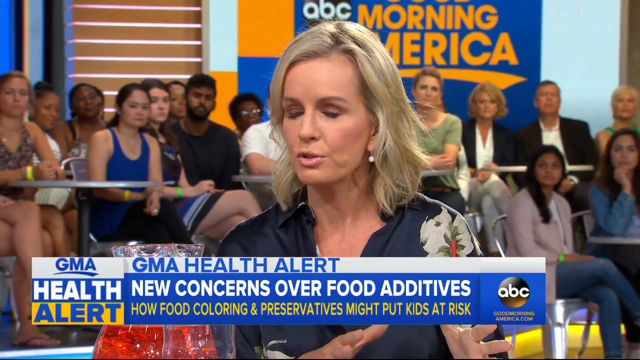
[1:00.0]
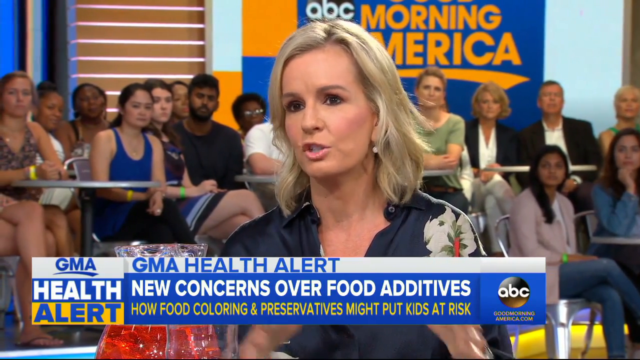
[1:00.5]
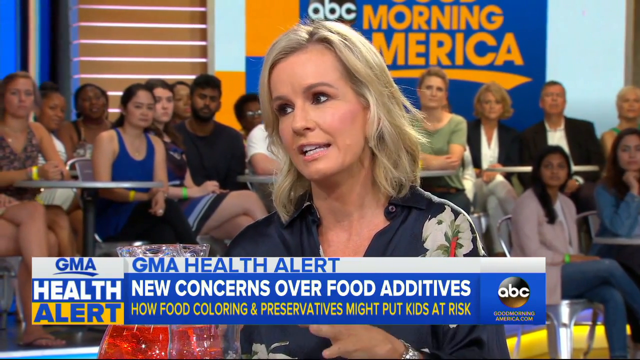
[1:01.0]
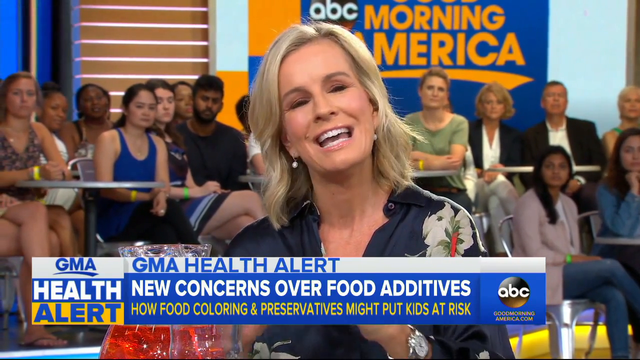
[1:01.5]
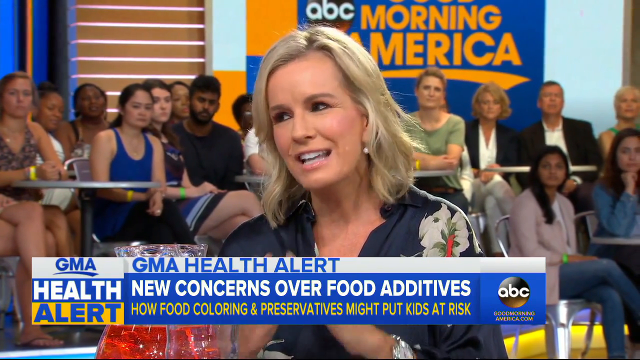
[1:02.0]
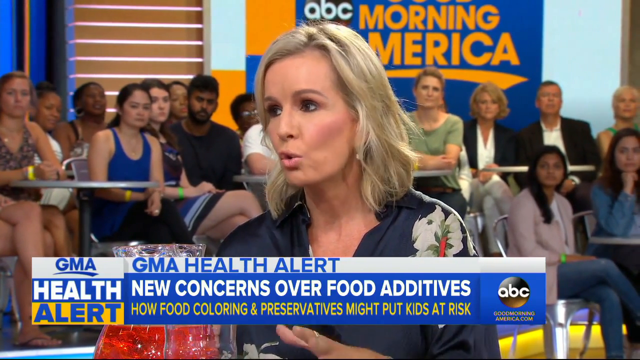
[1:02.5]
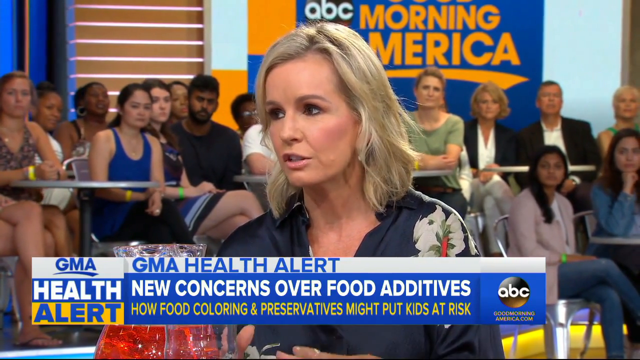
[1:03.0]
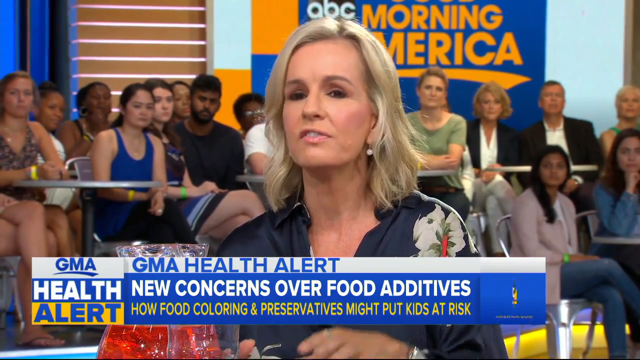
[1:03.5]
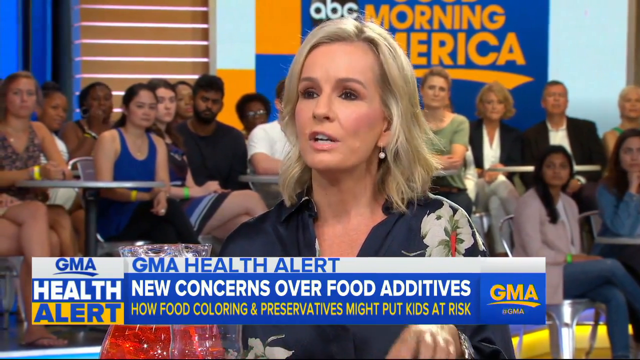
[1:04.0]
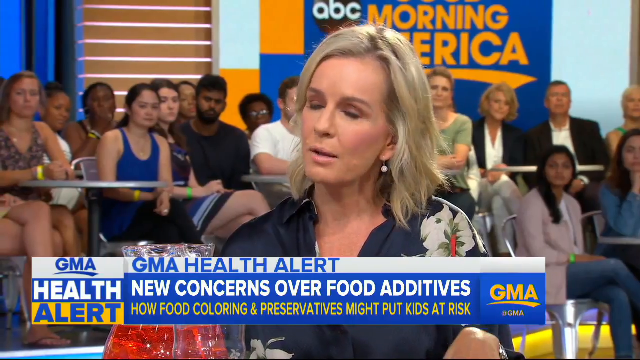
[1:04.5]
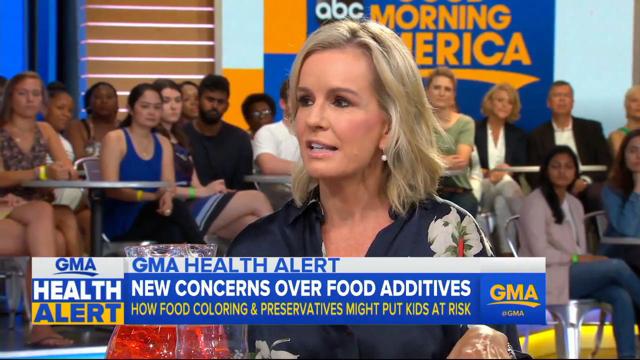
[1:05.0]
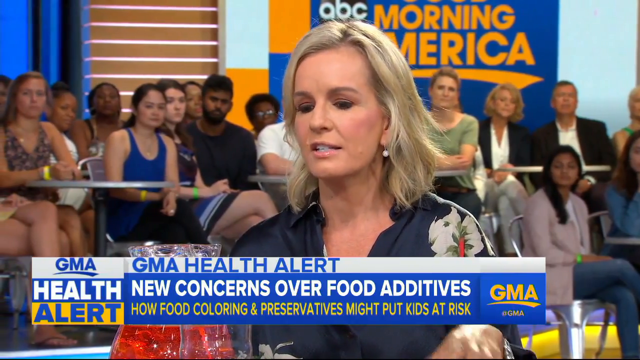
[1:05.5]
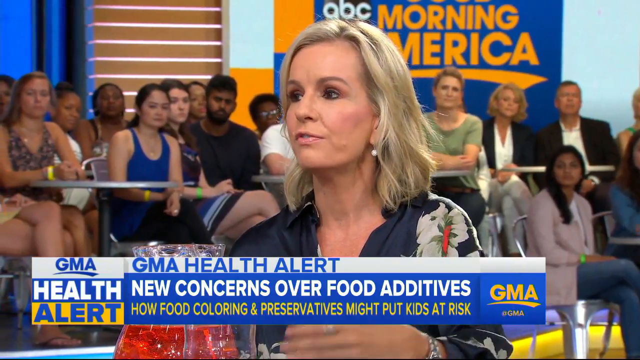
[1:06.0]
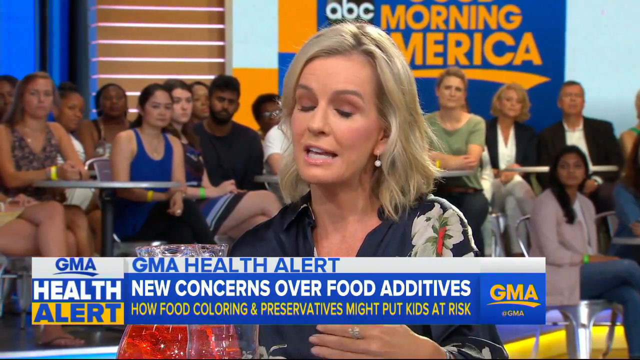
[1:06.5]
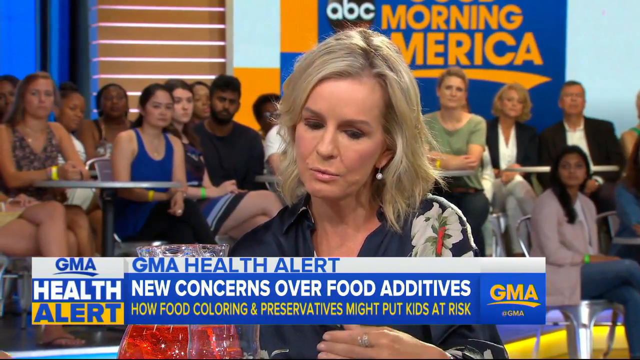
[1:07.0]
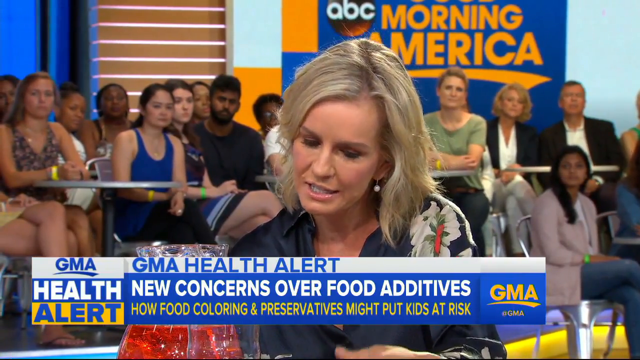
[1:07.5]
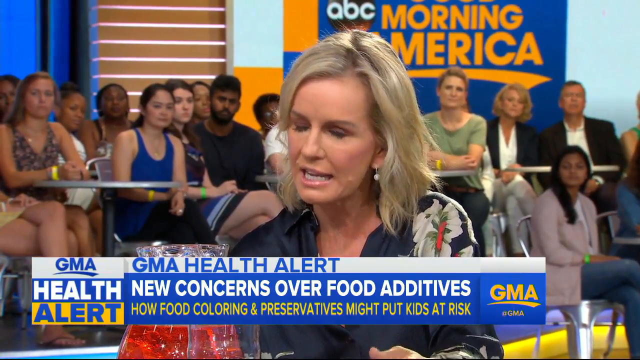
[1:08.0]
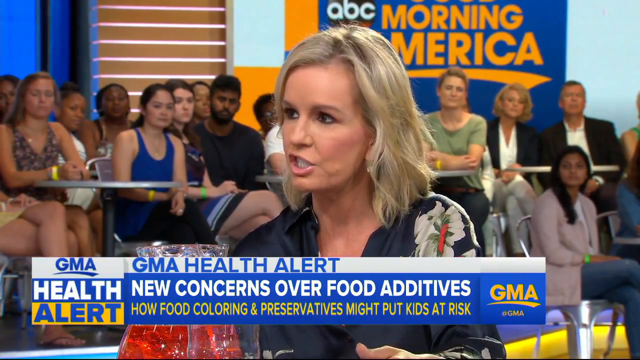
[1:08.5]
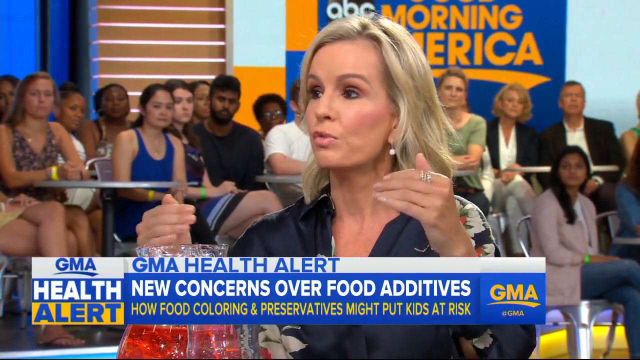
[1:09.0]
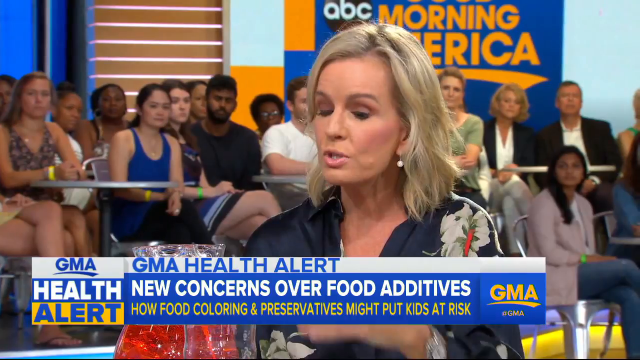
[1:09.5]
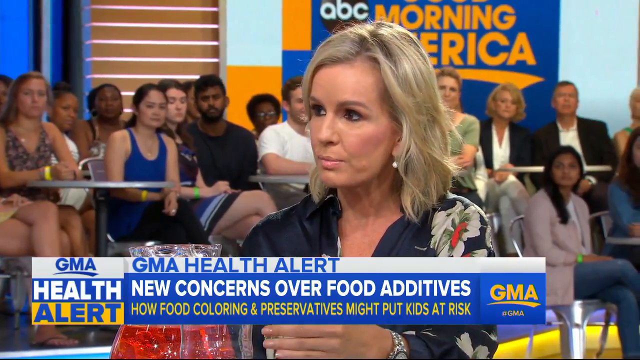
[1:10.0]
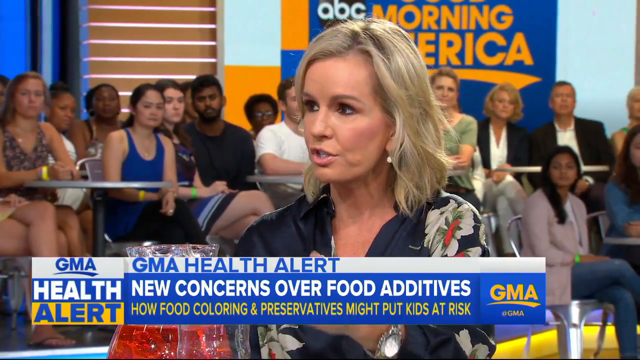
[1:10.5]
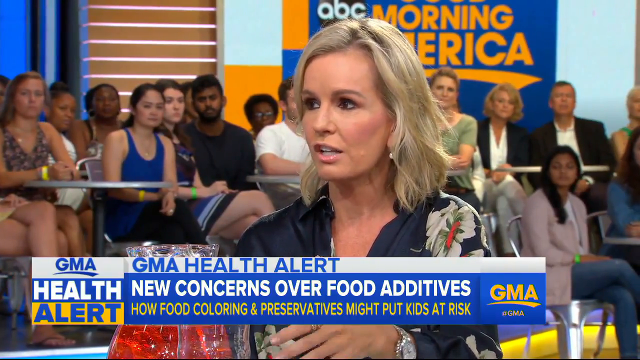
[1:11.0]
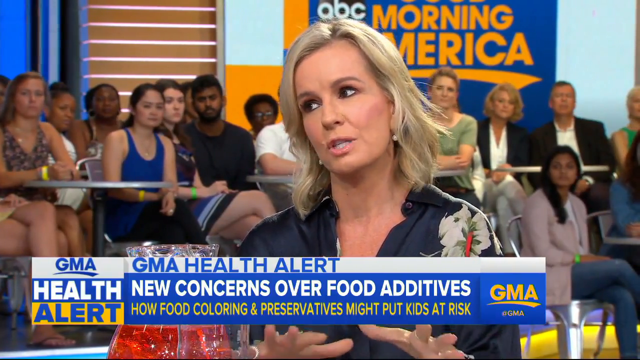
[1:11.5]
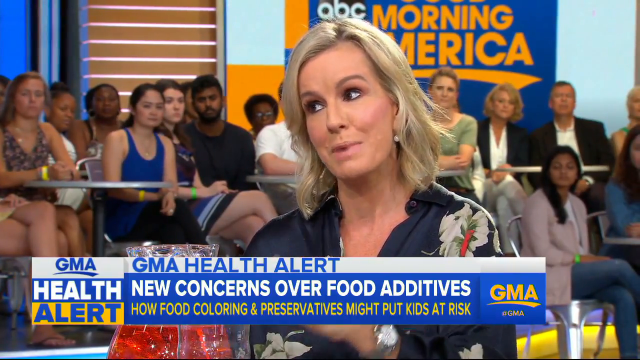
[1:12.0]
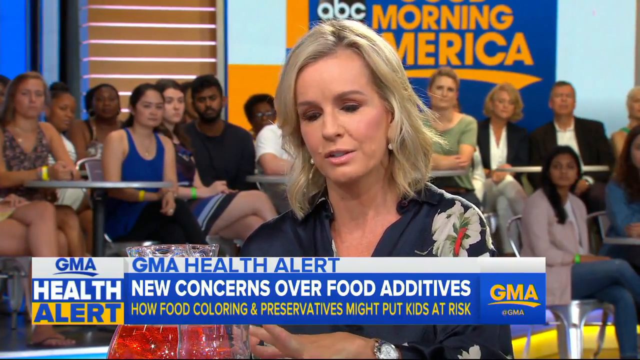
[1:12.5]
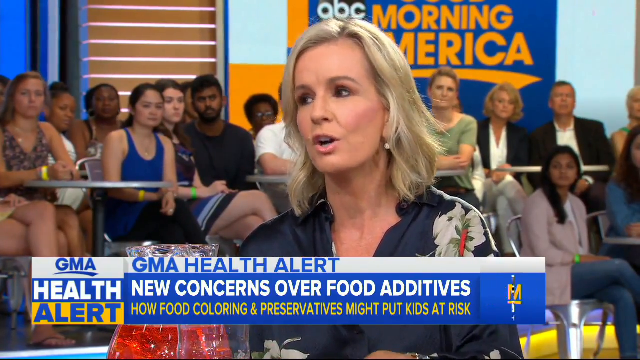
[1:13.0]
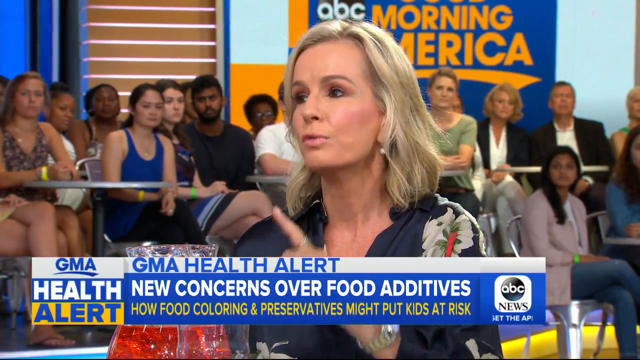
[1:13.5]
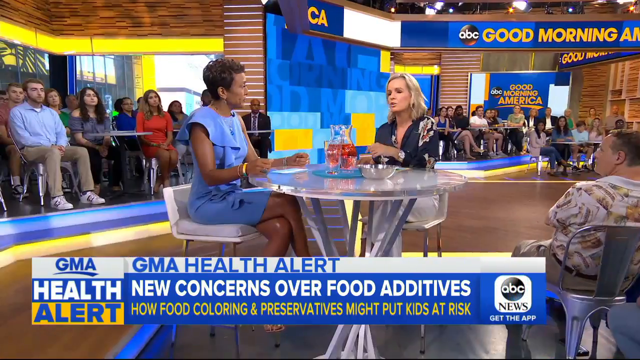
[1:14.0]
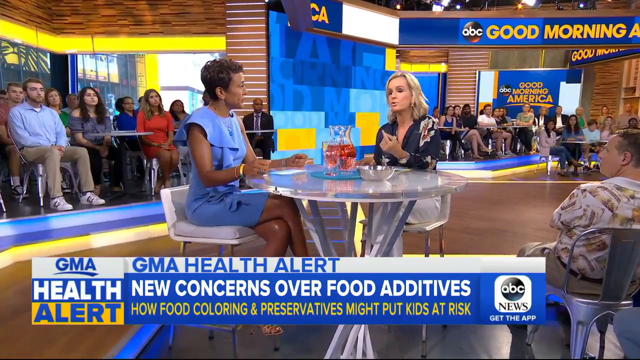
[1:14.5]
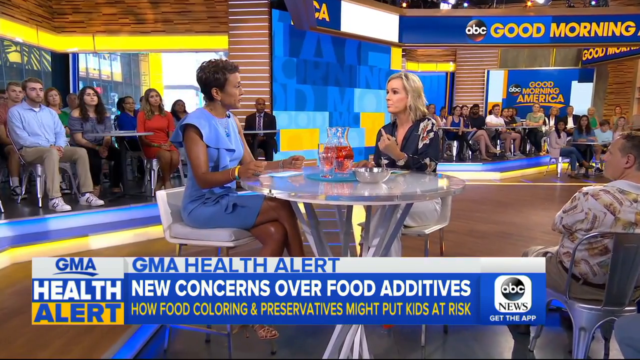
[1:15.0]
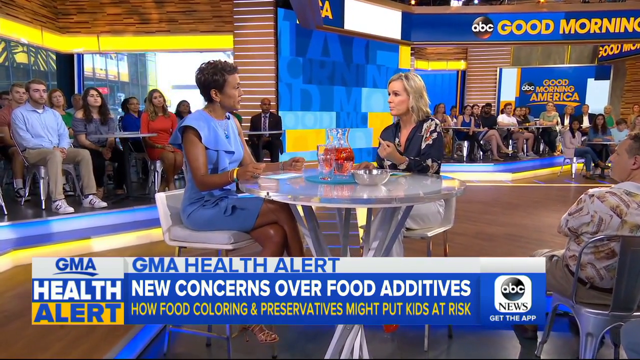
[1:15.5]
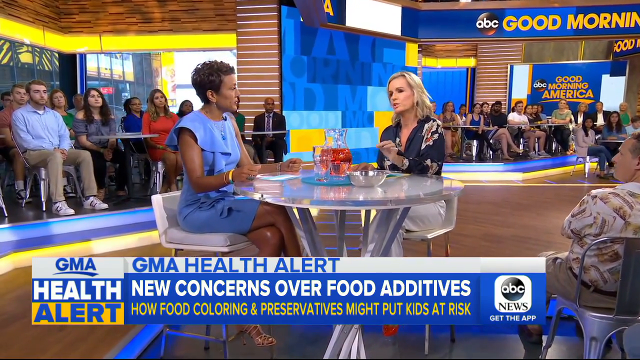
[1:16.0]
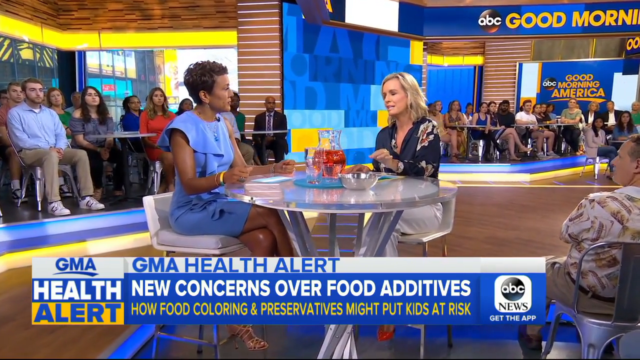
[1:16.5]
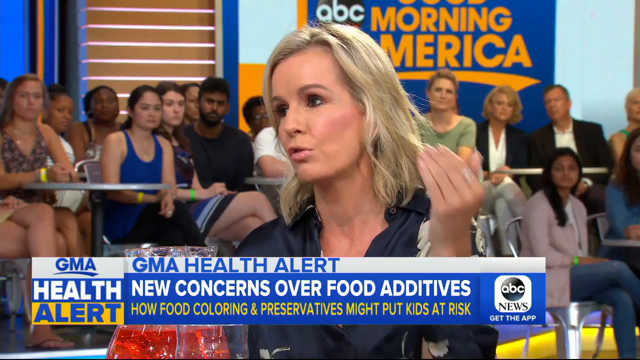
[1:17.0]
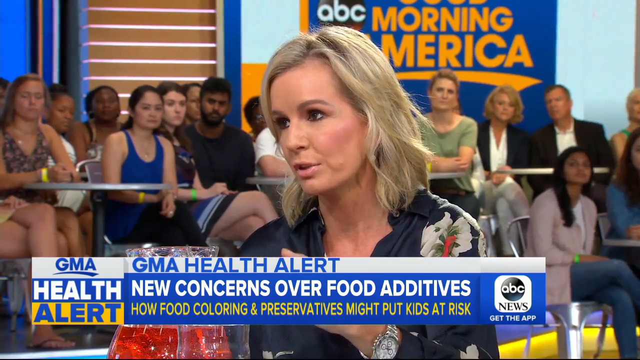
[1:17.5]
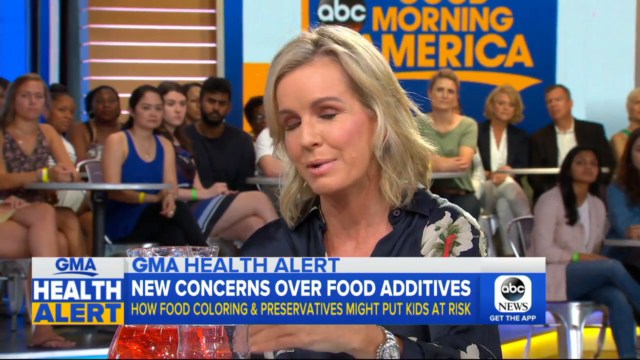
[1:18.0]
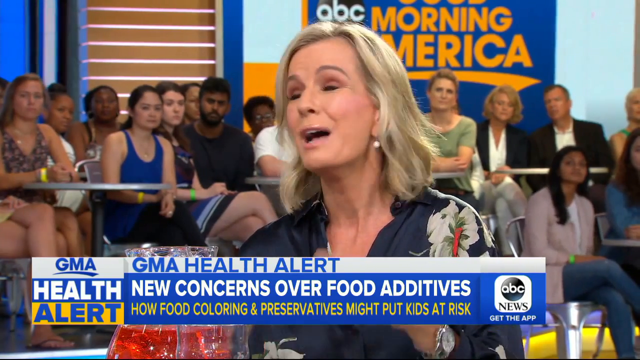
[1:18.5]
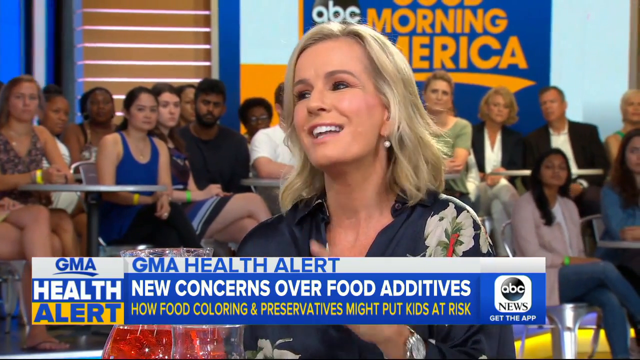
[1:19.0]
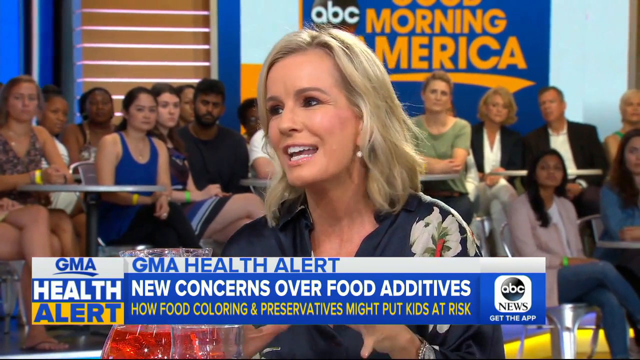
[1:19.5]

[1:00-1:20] Dr Jennifer Ashton is talking. She has wavy, tied blonde hair, fairly dark eye makeup, pale lipstick and bright white teeth. She looks intently at her hands and the table while explaining something, then looks back at the other woman across the table. The view pans out so all the studio guests can be seen again. The audience is of mixed ages and mixed races, with lots of men and lots of women, all dressed very differently. The ABC Good Morning America signs are still up in the background, along with lots of lighting and background billboards. The tables the people are sat at are all silver, and they look to be sat on silver metal chairs; many of them have their legs crossed. The "new concerns over food additives" GMA health alert text is still at the bottom of the screen.